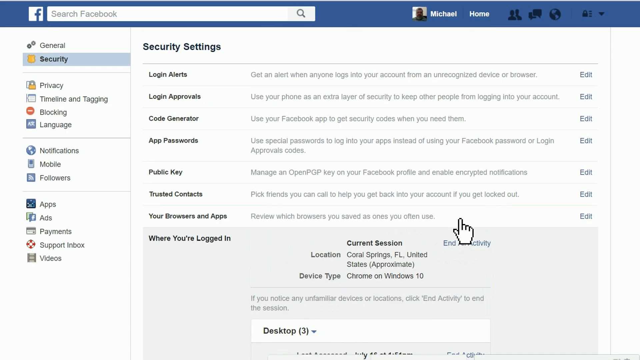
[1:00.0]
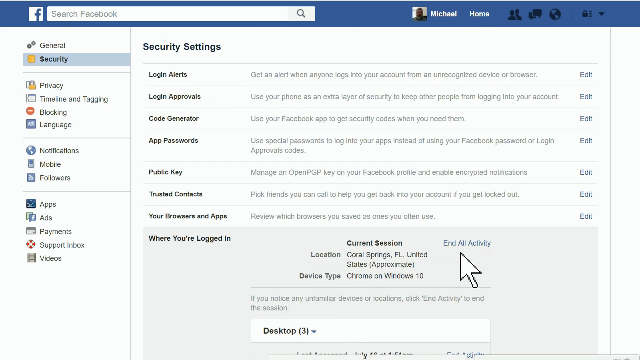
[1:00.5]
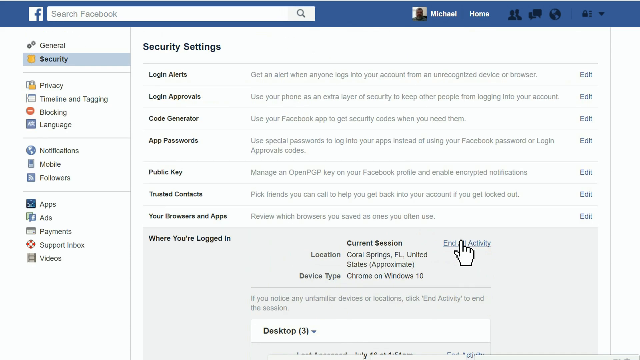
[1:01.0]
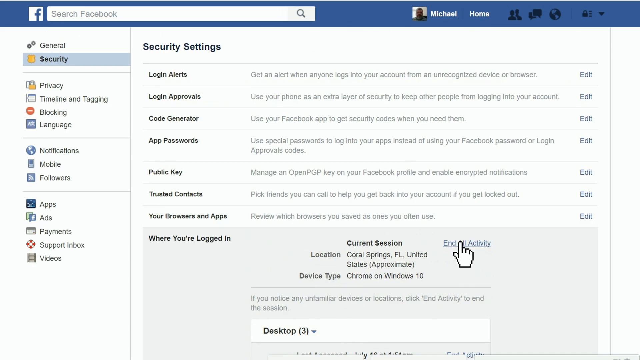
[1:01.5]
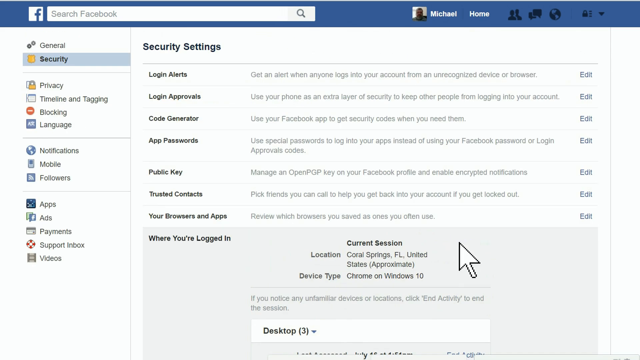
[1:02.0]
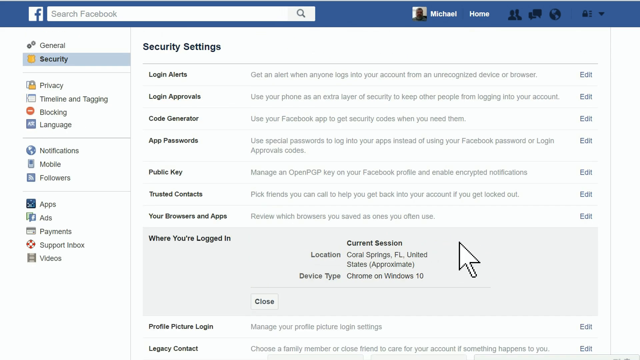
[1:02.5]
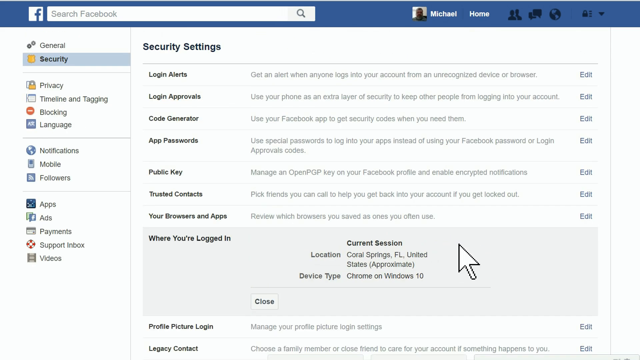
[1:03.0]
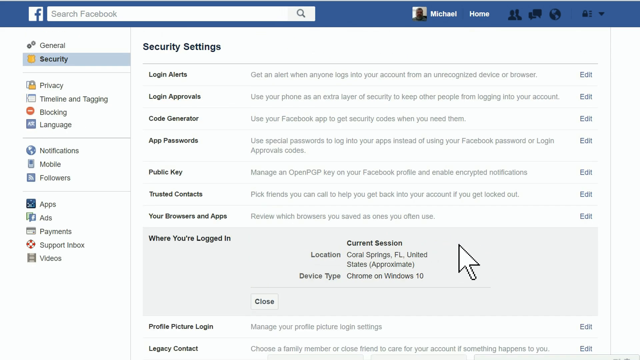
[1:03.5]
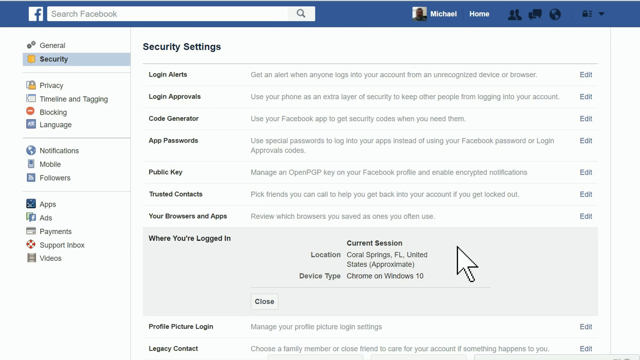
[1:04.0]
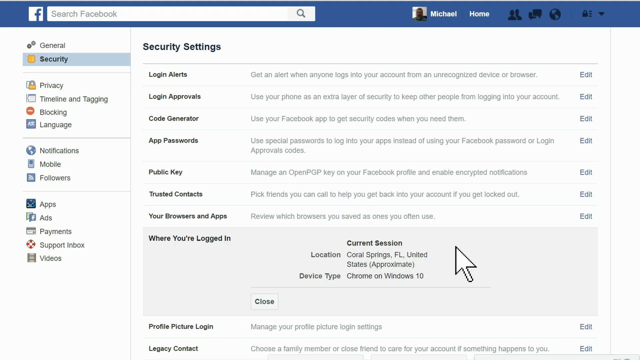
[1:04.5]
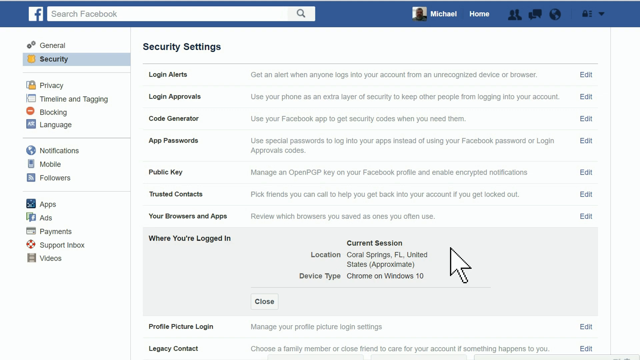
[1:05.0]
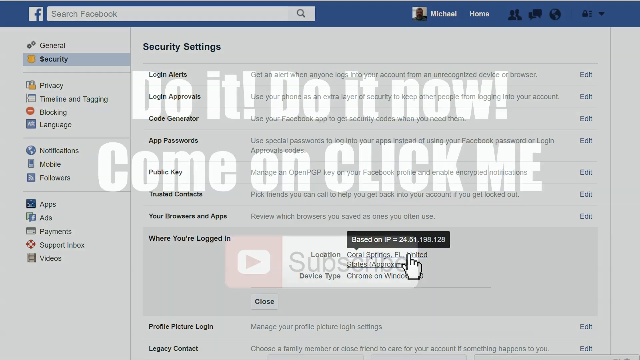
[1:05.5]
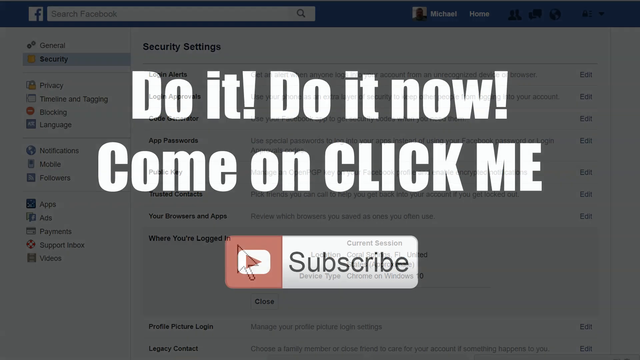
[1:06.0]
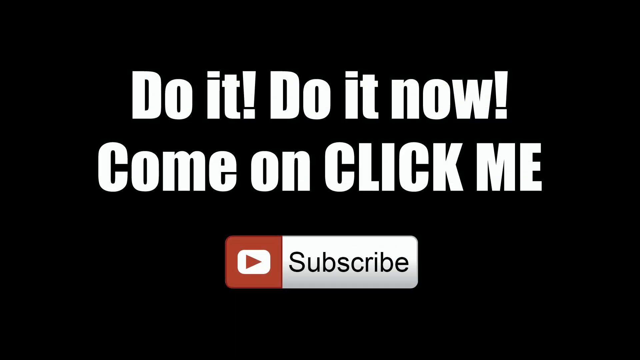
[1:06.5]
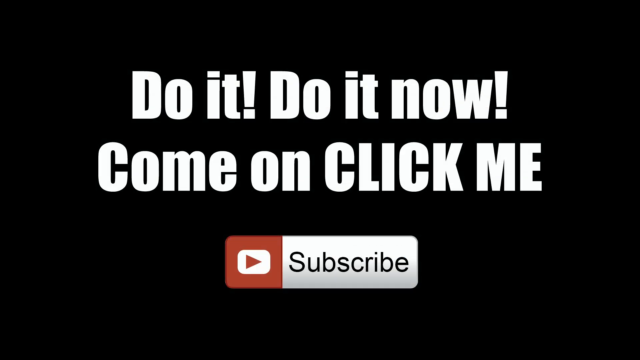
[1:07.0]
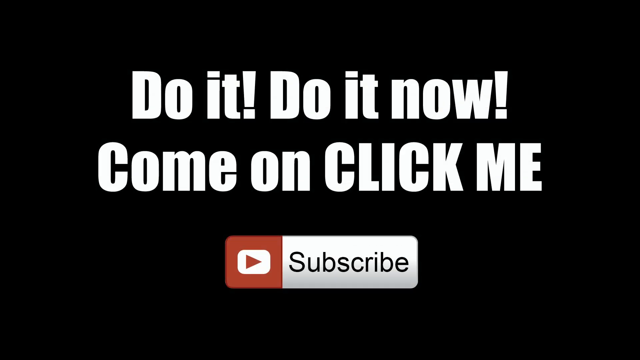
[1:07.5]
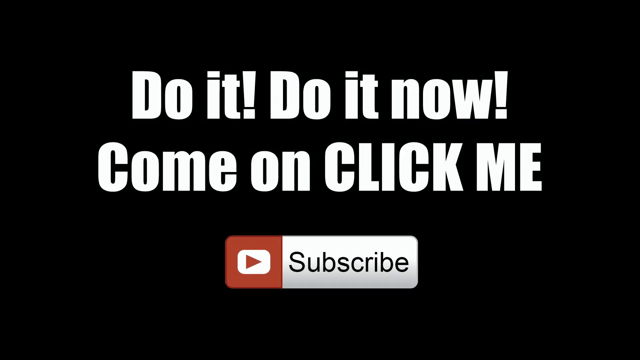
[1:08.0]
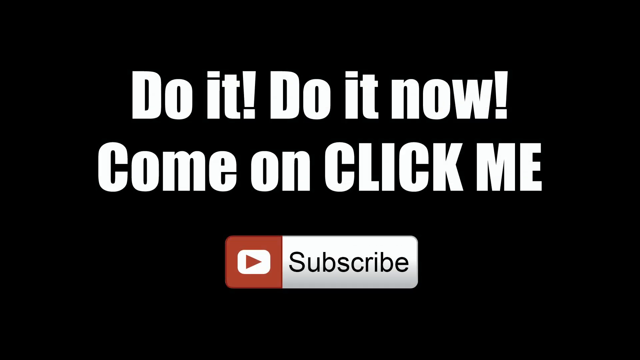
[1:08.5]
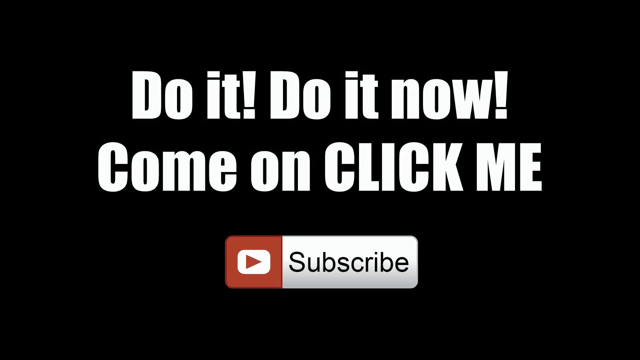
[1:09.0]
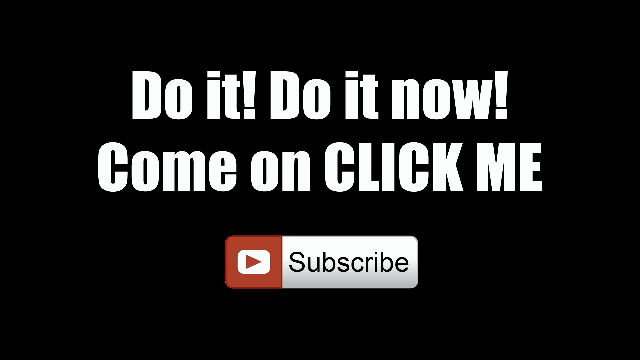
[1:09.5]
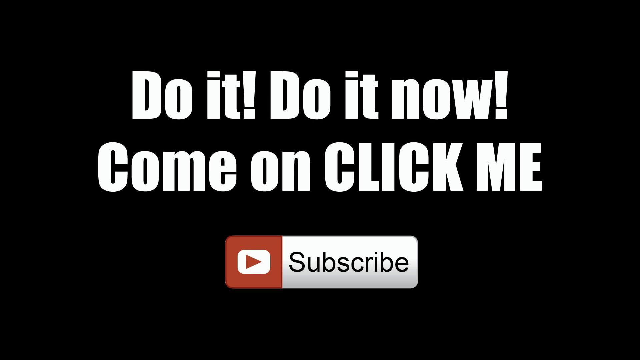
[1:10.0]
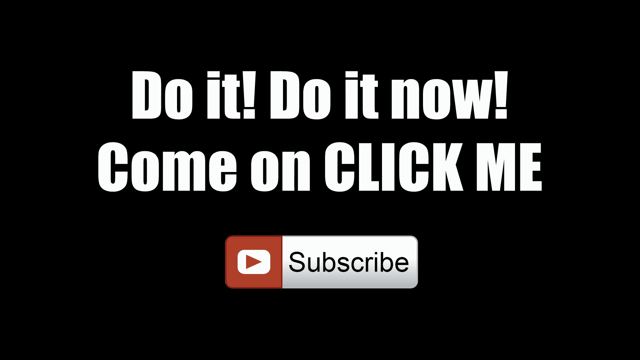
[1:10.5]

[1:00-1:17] The user can see where all the sessions on the account are located across devices around the world, with several open sessions from both Messenger and Facebook, in the browser and in the application. The button is clicked to close them, apparently so that those devices will ask for the password again. The video ends with text that says "do it, do it now, come and click on the subscribe button". The video is very simple, with a black background, white text, and images of icons and logos.